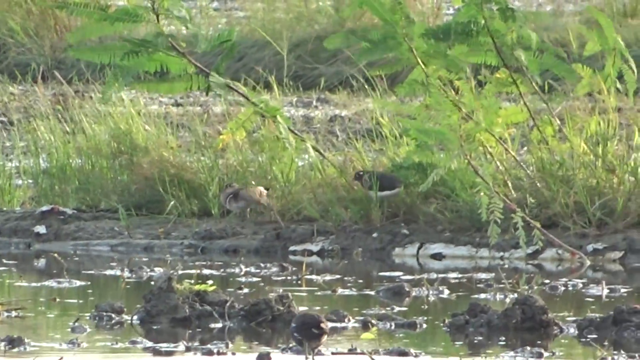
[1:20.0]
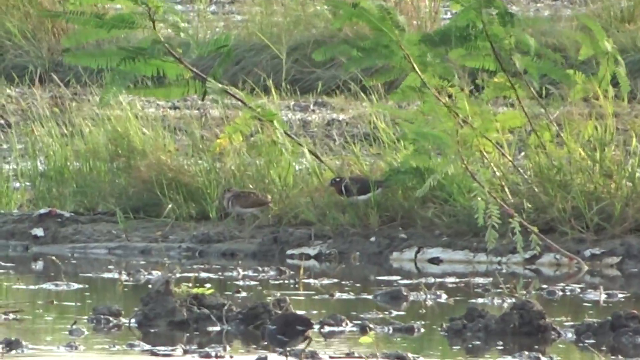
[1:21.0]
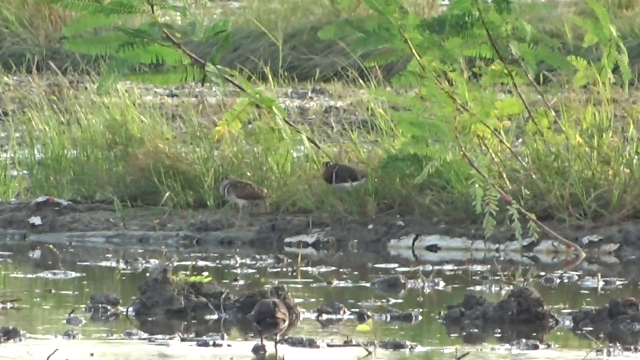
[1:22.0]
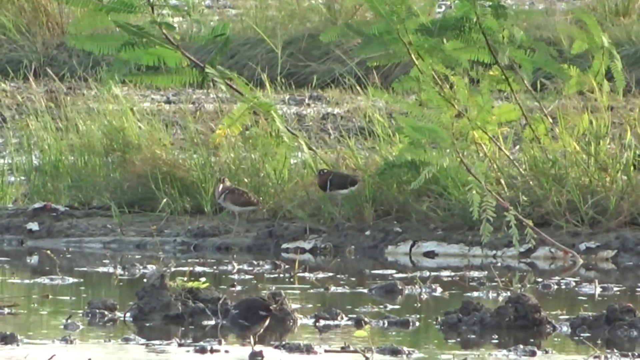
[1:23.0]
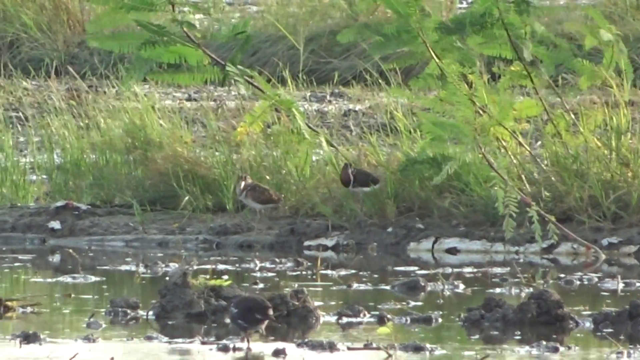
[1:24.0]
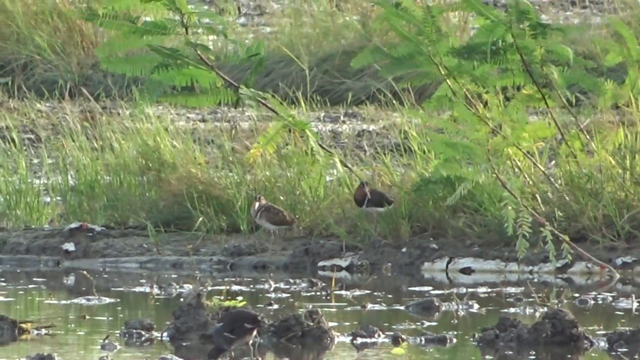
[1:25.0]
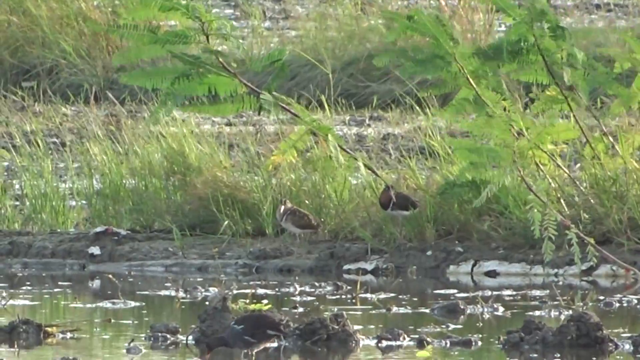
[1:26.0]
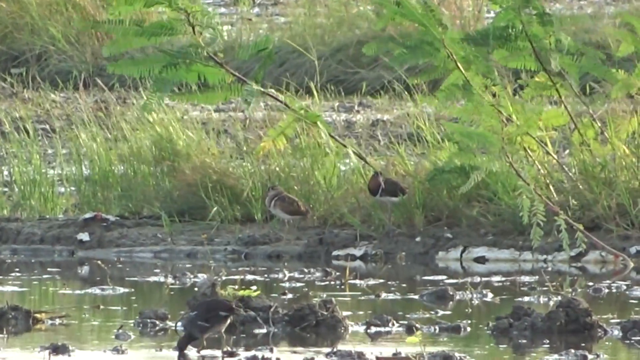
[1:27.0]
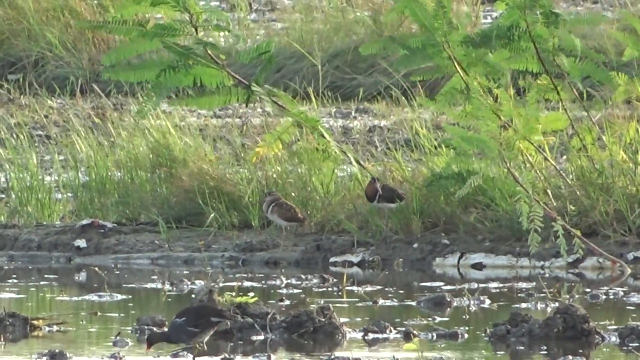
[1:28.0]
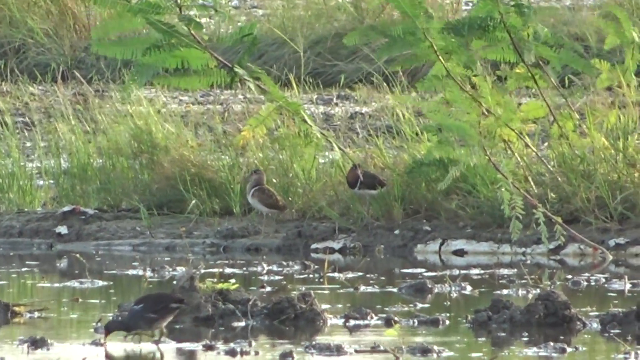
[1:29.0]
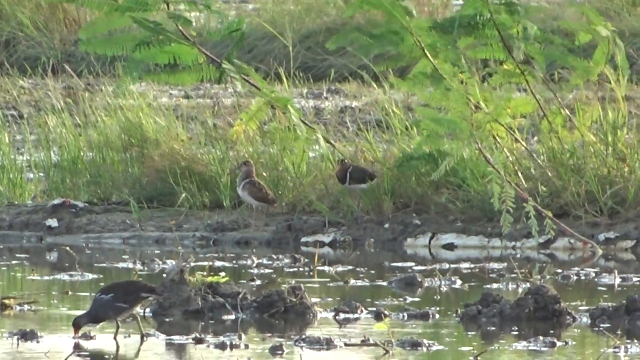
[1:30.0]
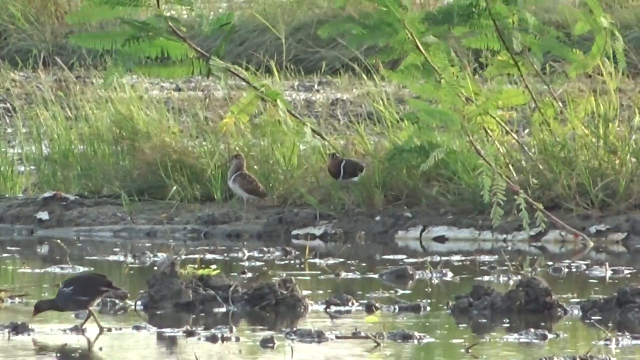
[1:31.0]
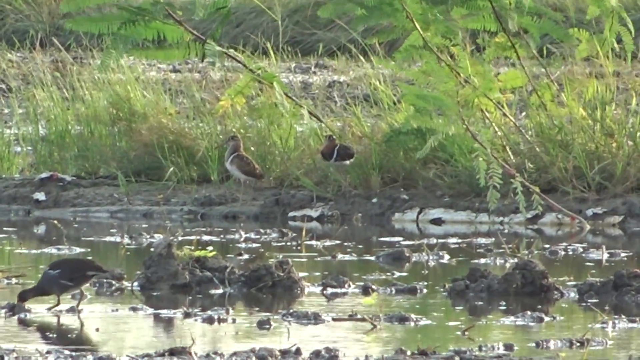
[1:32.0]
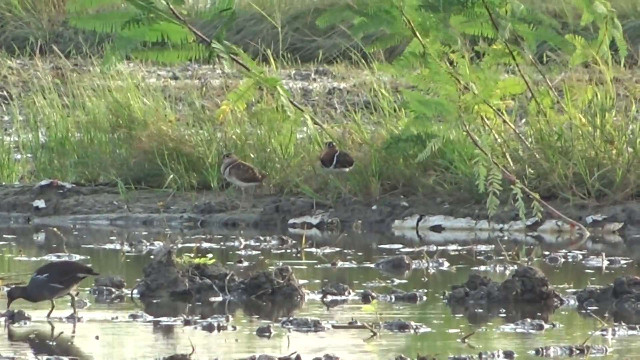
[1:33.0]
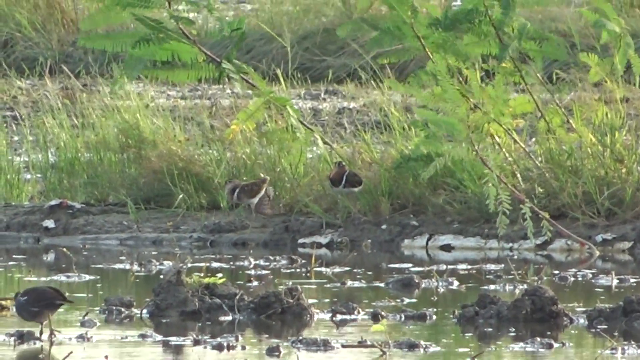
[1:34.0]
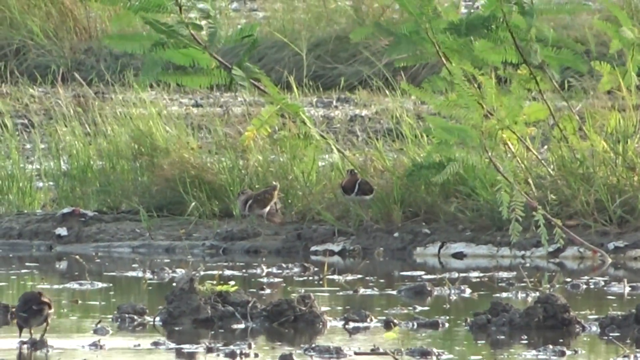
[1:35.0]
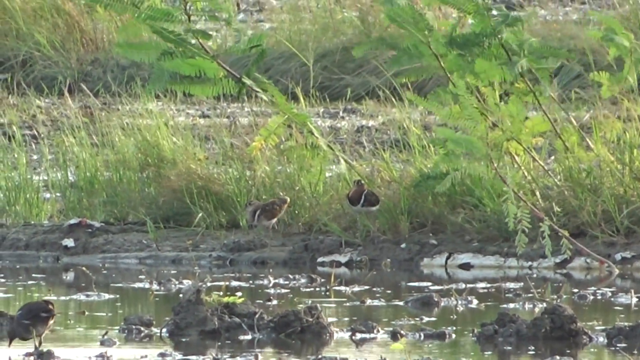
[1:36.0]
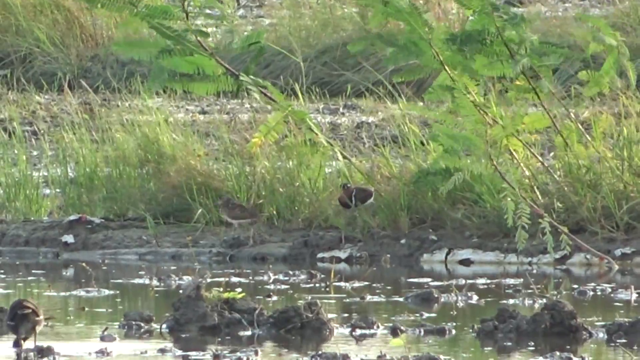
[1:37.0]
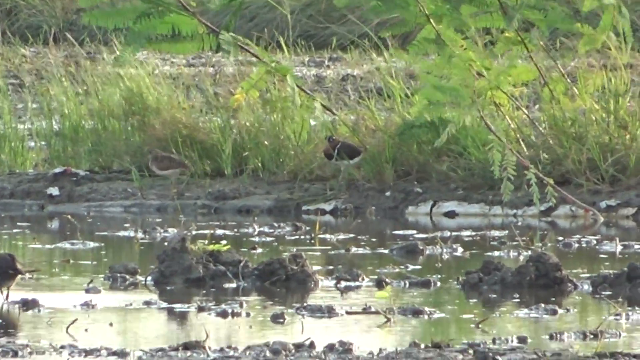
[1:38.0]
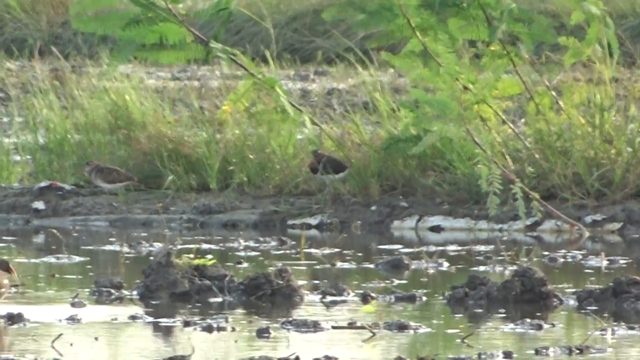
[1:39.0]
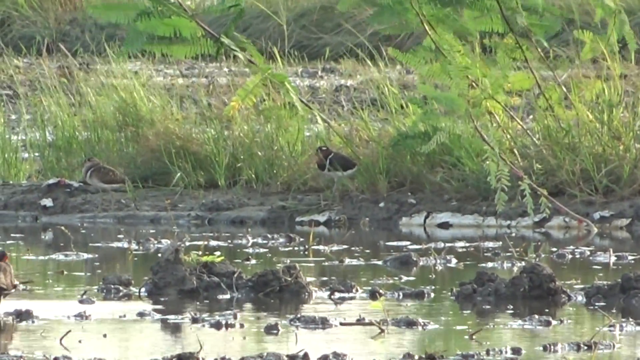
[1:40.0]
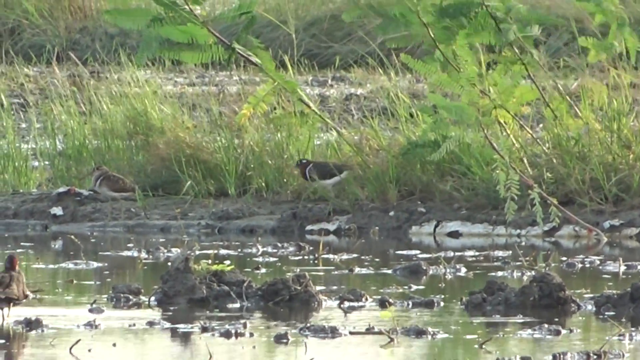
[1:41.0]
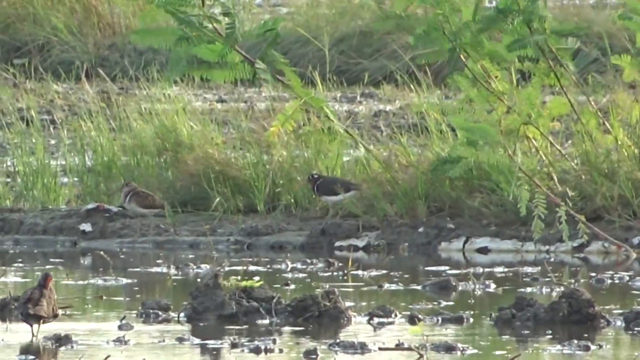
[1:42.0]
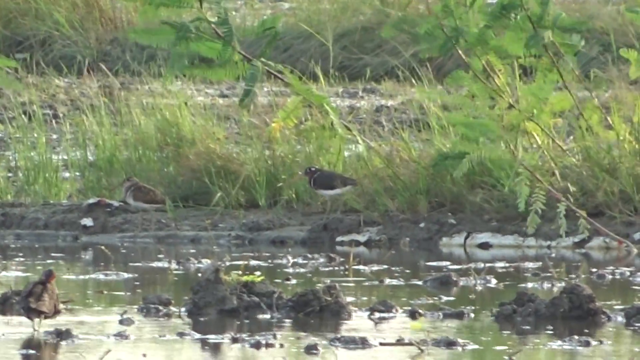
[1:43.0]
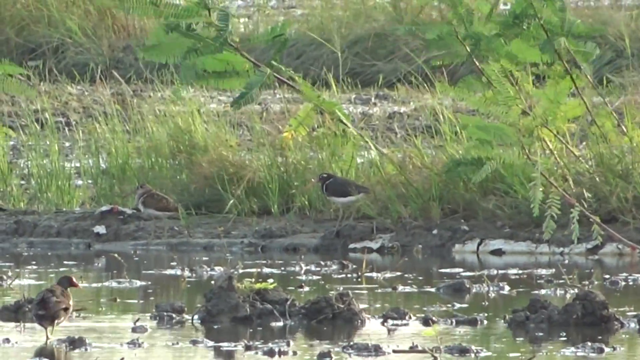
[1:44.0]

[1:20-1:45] Birds walk around the swampy area, pecking at the water and mud looking for food. There is greenery, grass, and some trees blowing in the wind. The wind has picked up: the branches and twigs move a little faster, and the grass blows harder. The water ripples. There are clumps of muddy dirt in the swampy area. The birds slowly walk around taking small steps and then stand around, and some peck down in the water in the muddy area looking for something to eat. They mostly have black wings with a white underbelly, long thin legs, and a thin beak. Apparently only three birds are visible in the swamp area; there could be some behind the shrubbery, but it is hard to tell.